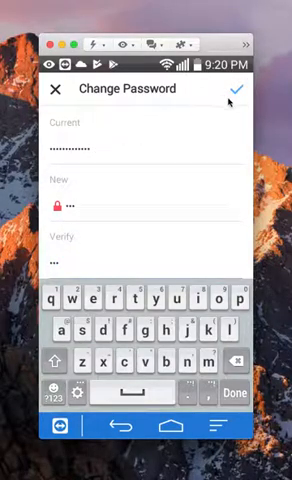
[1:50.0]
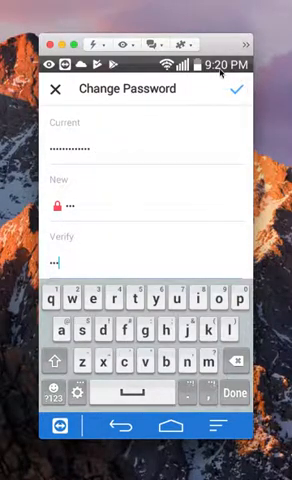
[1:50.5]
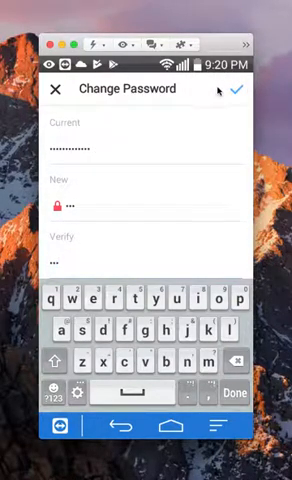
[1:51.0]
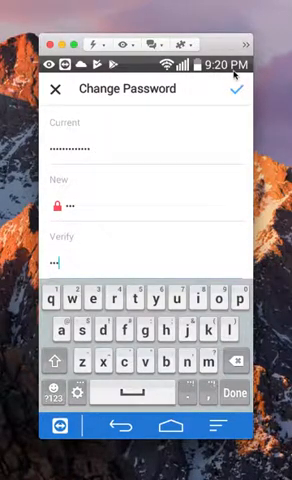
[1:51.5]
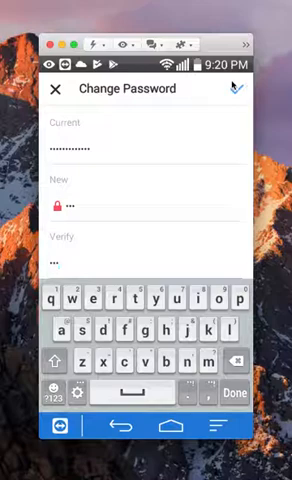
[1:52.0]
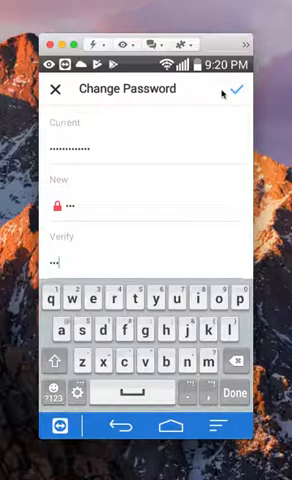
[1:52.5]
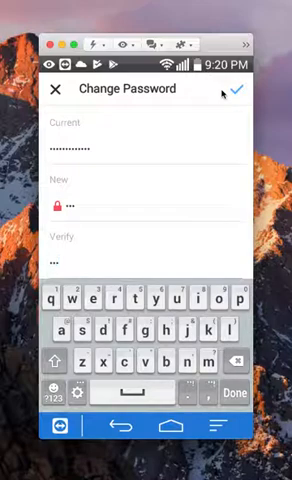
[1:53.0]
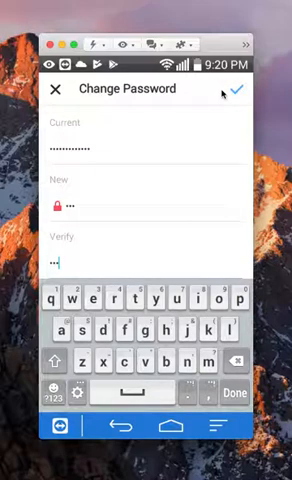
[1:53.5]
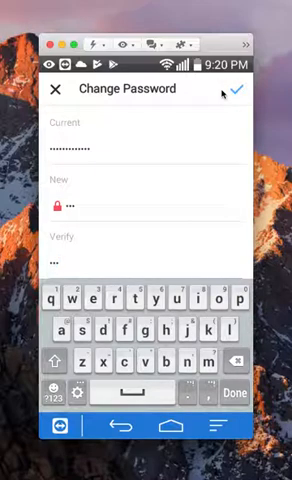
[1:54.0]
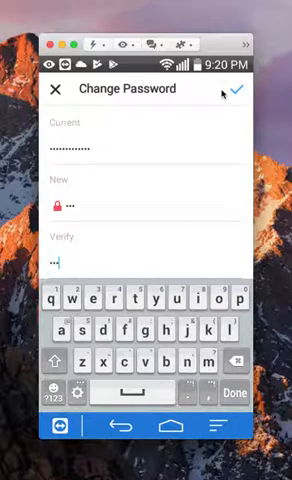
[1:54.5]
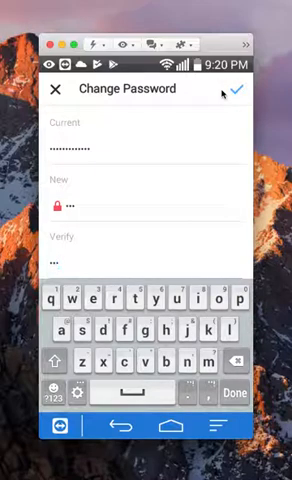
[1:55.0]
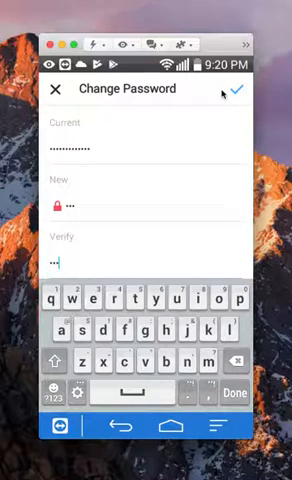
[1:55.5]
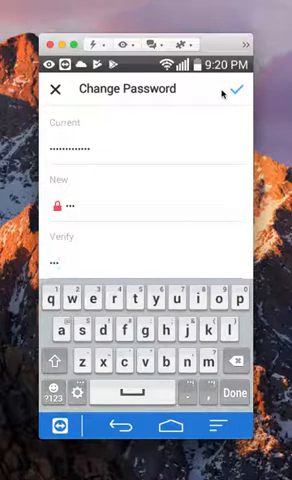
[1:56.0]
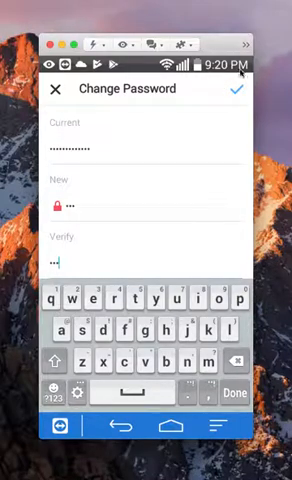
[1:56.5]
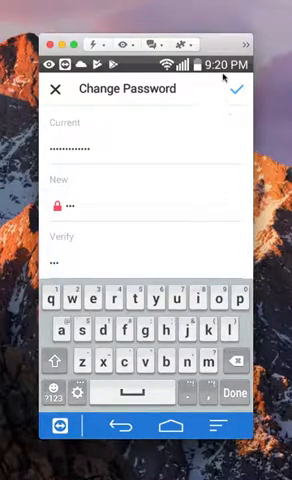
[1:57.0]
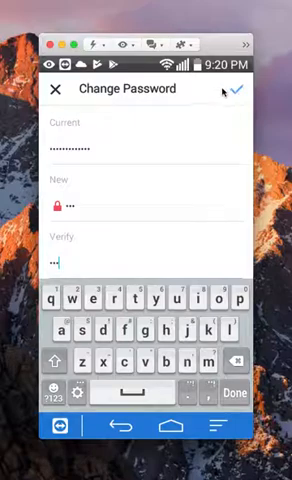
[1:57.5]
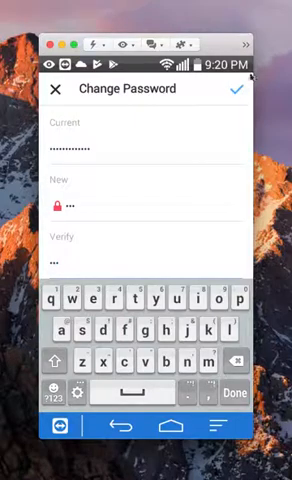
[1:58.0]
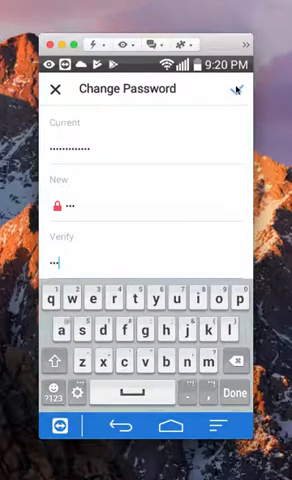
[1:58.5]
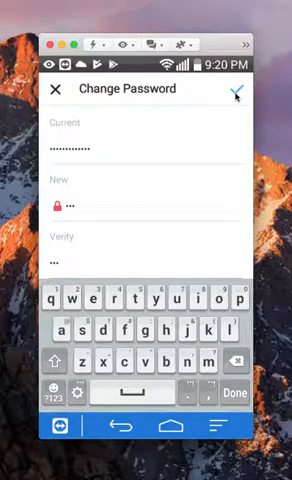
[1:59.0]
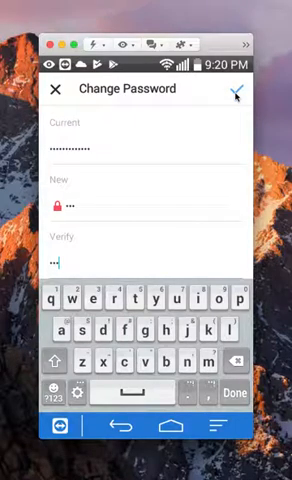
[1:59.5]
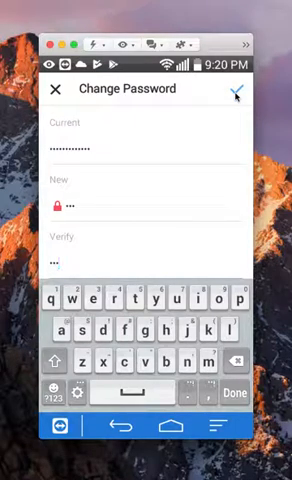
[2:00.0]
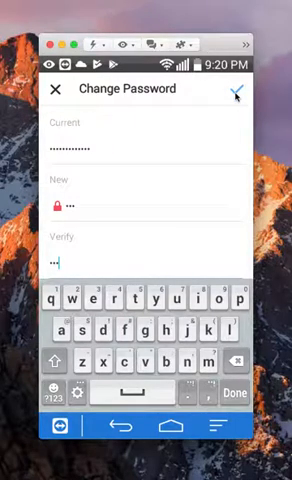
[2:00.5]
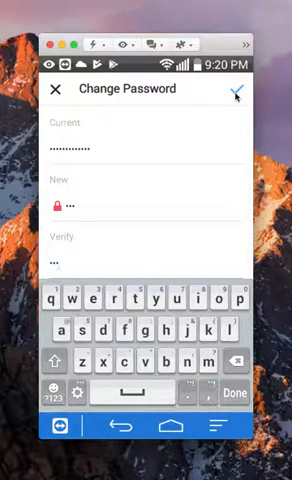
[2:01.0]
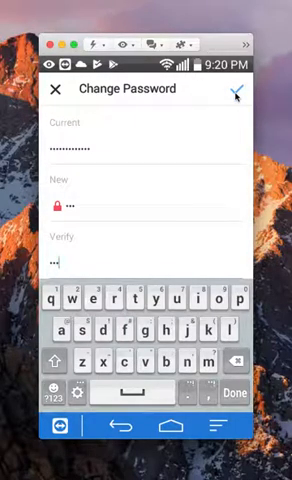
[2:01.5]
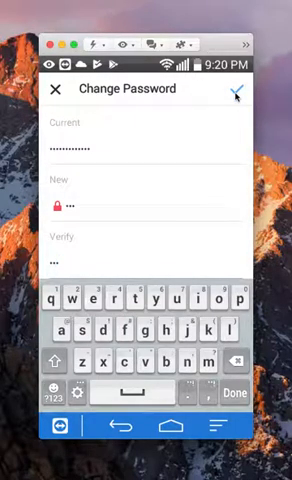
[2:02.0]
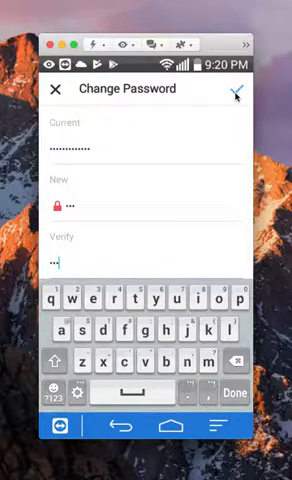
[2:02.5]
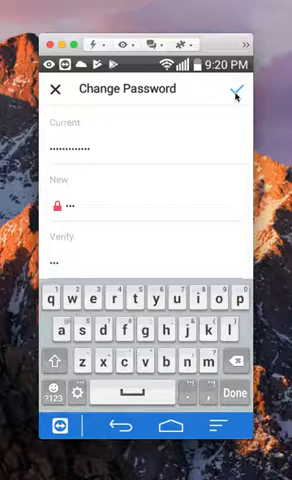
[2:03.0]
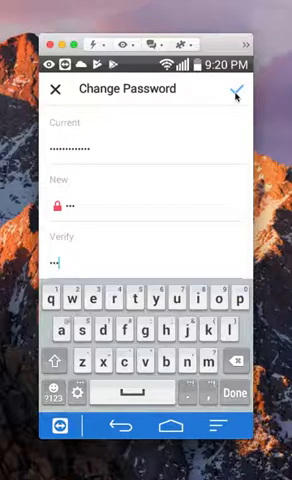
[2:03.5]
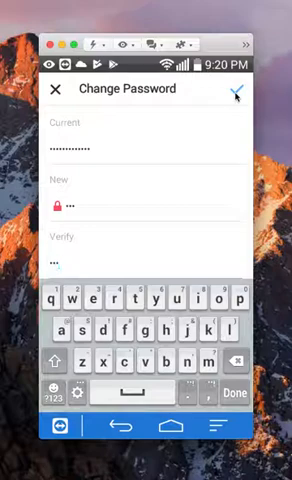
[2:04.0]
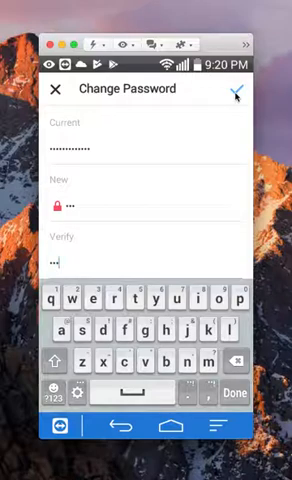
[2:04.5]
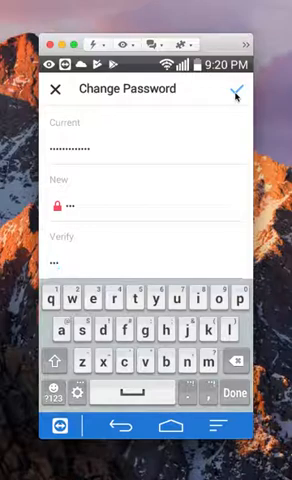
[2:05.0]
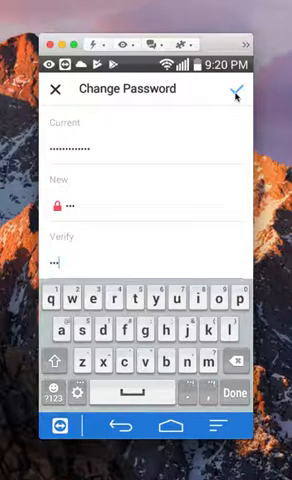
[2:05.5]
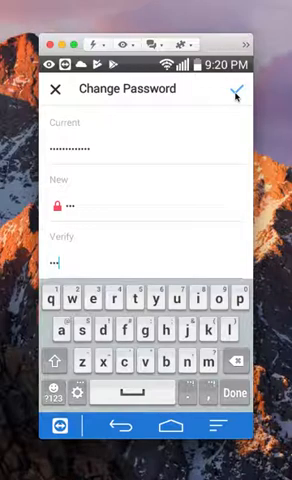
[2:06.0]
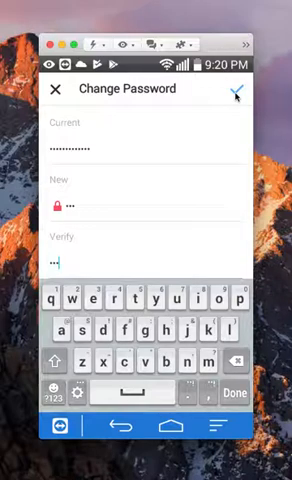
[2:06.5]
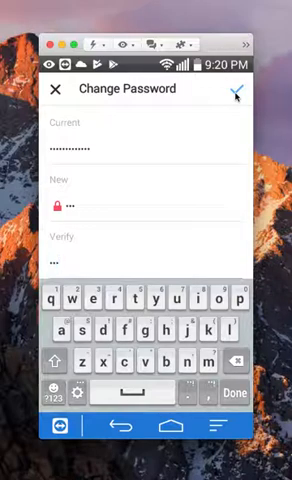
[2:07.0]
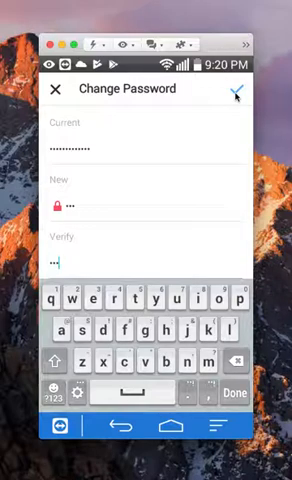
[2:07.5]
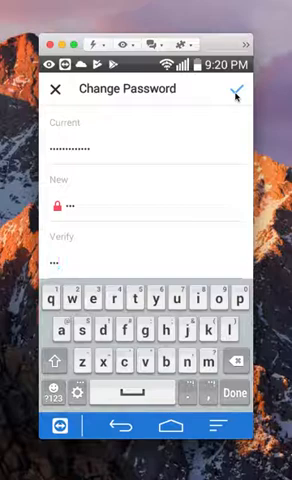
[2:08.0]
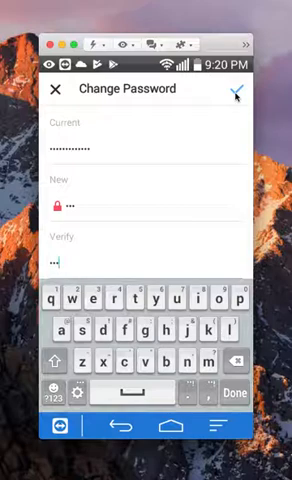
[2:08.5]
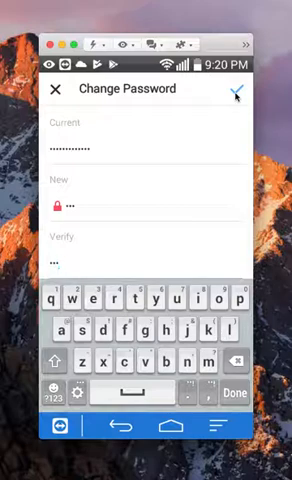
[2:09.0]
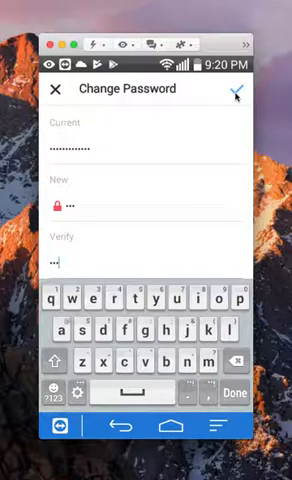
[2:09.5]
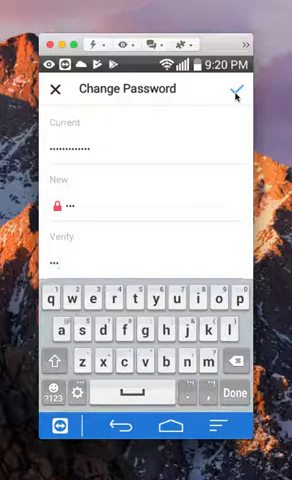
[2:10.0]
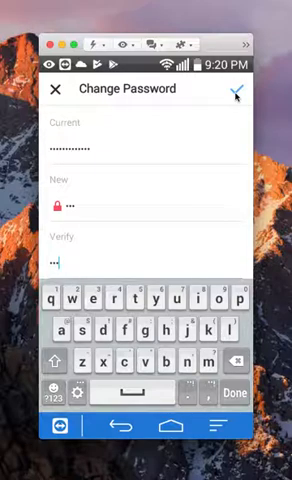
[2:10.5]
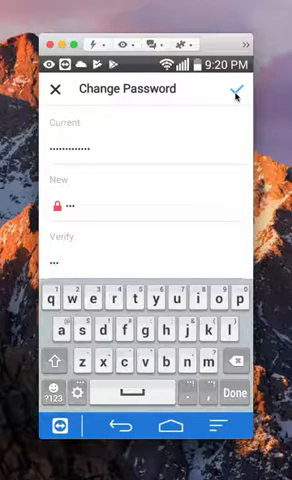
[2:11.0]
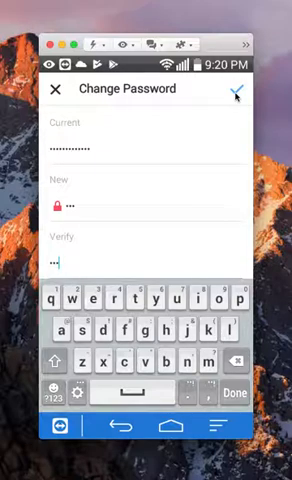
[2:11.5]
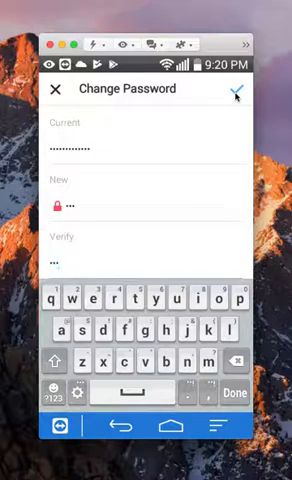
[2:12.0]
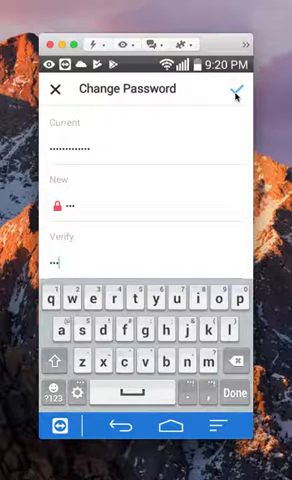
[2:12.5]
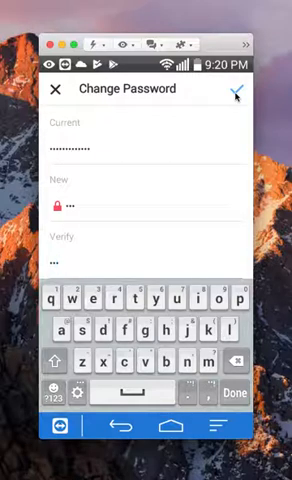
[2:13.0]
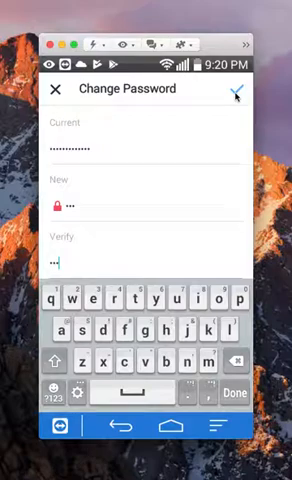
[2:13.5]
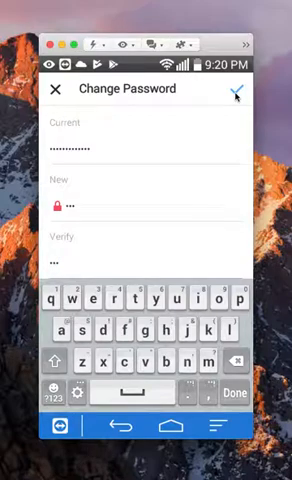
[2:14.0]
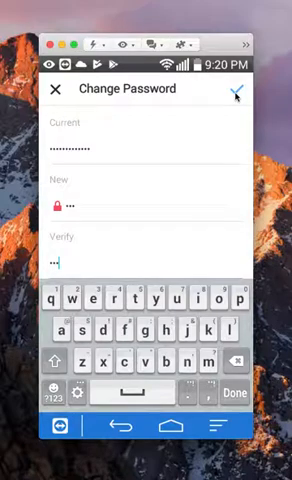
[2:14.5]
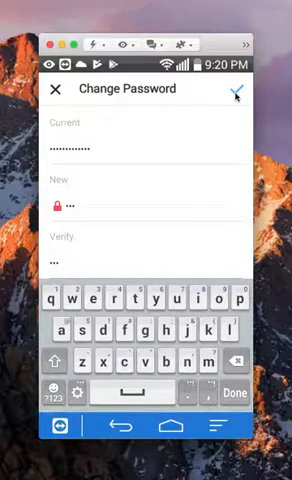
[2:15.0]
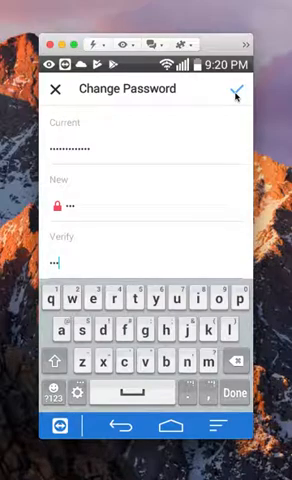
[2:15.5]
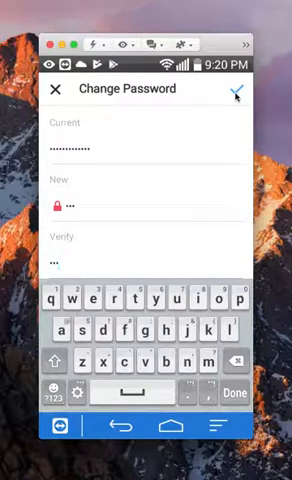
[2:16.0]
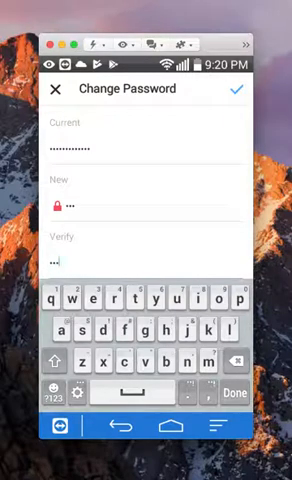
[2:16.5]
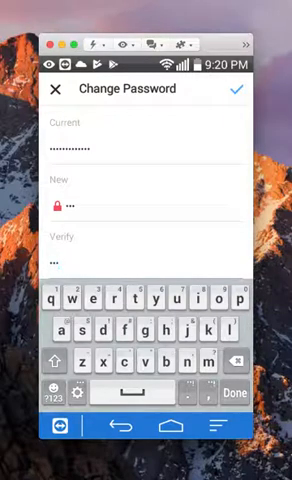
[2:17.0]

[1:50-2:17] On the password change screen, a current password has been entered, a new password has been typed into the new field, and the new password has been entered again in the Verify field. The Wi-Fi signal strength, phone signal strength, battery meter and time display are visible. At the bottom is a blue icon box with a back arrow and a Home button, and a keyboard is on the screen. When typing started, a blue check mark popped up toward the top of the screen, along with an x box.